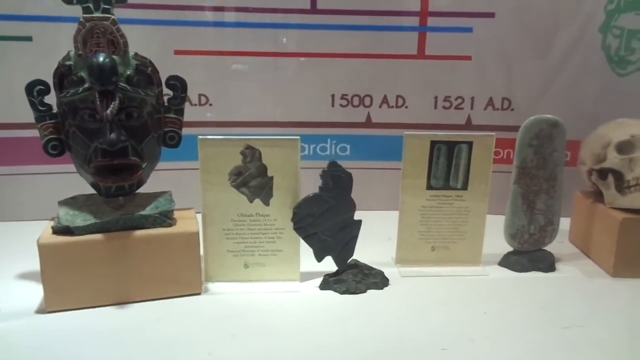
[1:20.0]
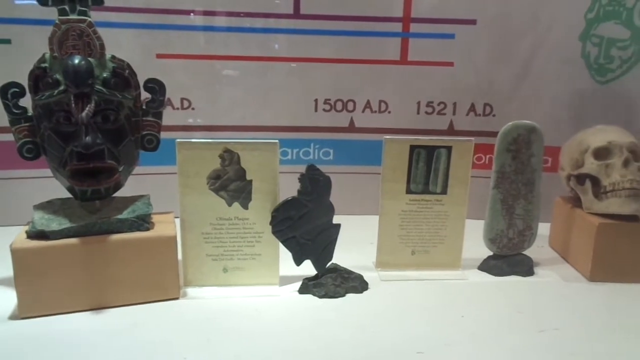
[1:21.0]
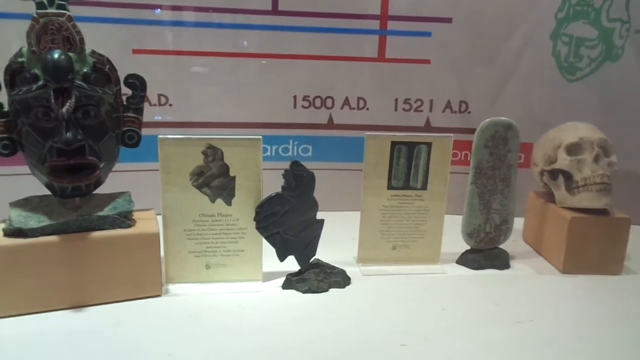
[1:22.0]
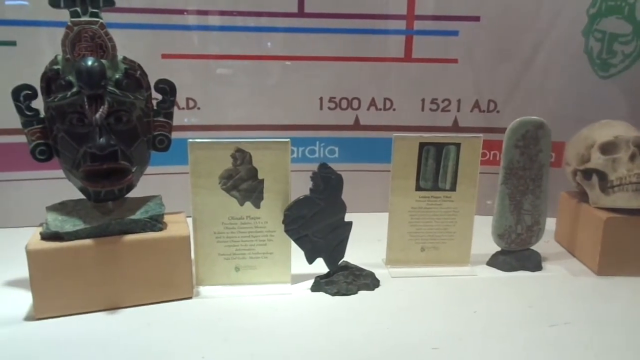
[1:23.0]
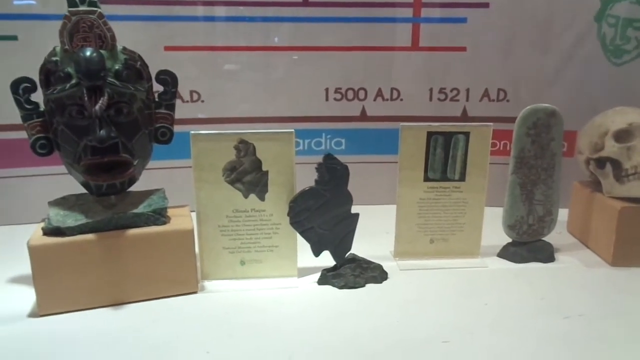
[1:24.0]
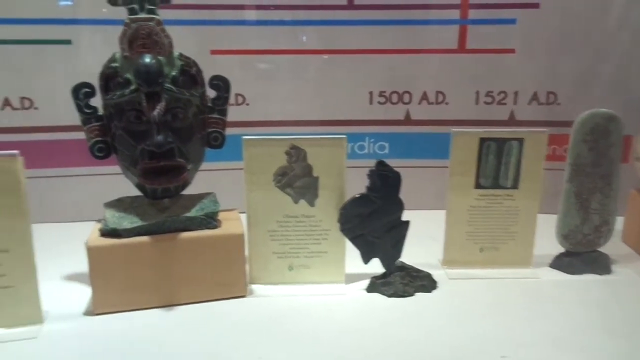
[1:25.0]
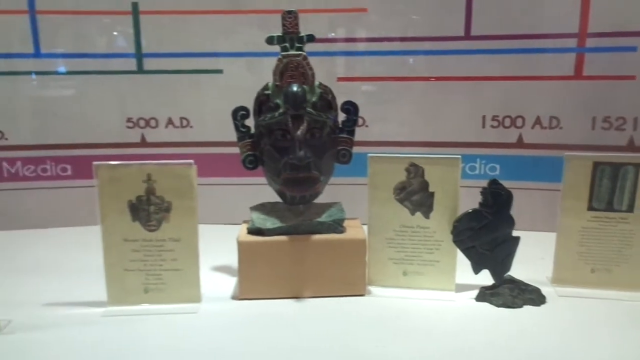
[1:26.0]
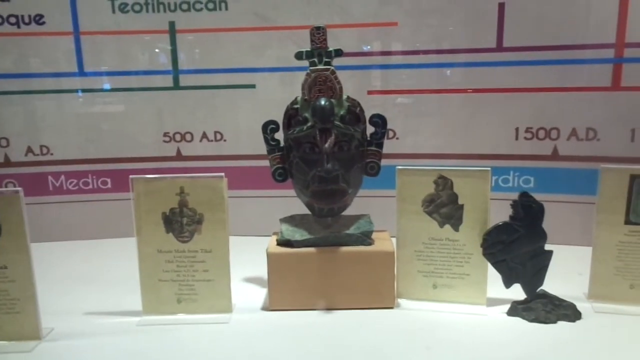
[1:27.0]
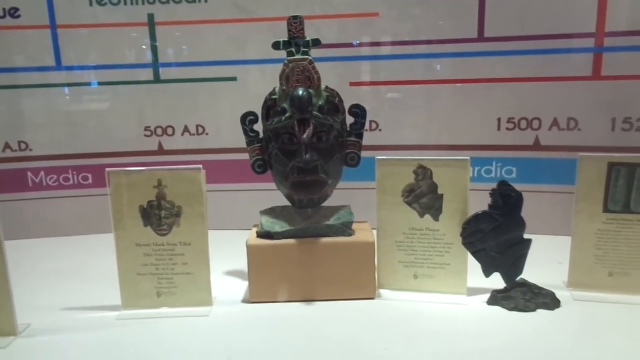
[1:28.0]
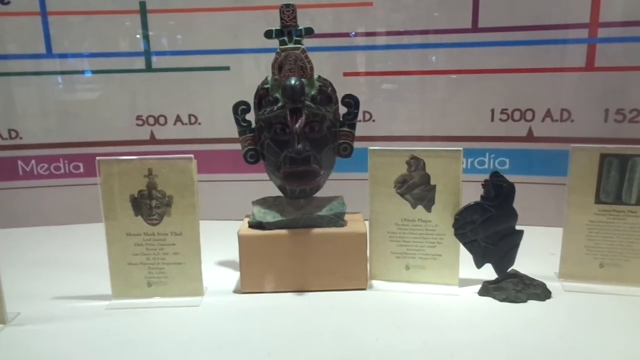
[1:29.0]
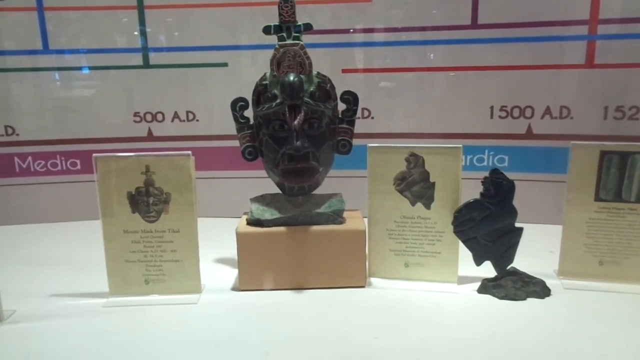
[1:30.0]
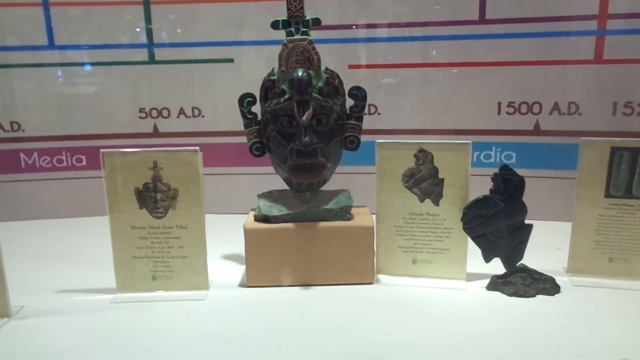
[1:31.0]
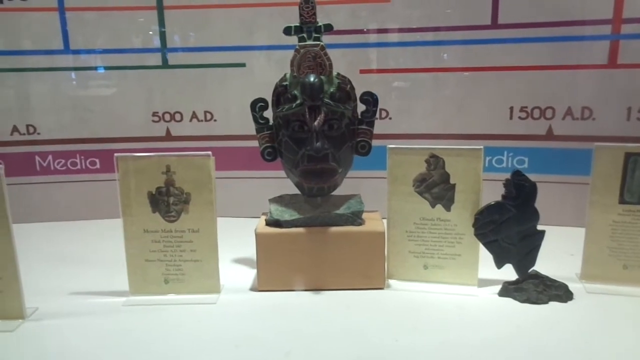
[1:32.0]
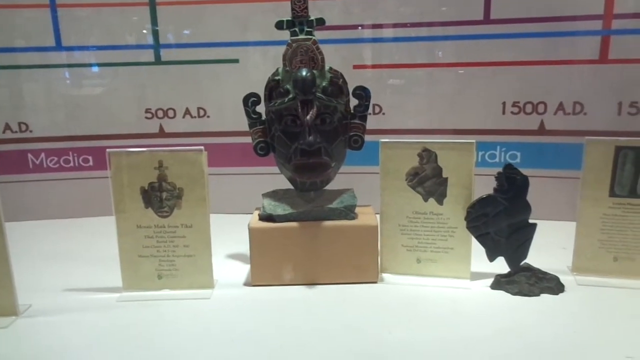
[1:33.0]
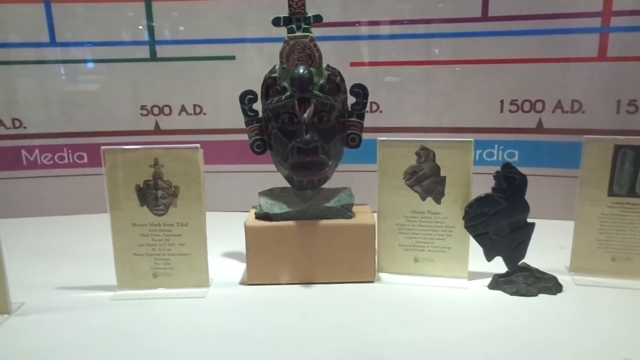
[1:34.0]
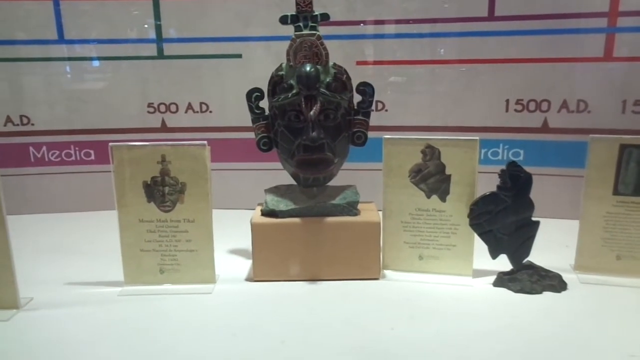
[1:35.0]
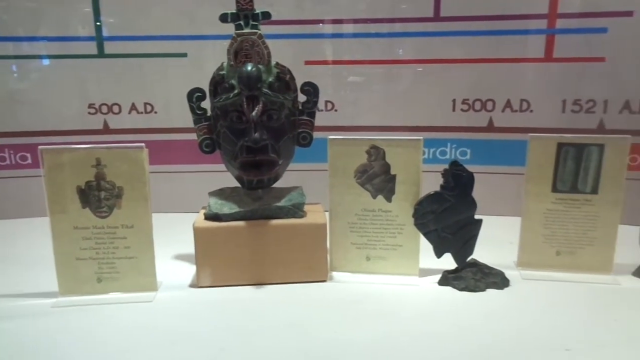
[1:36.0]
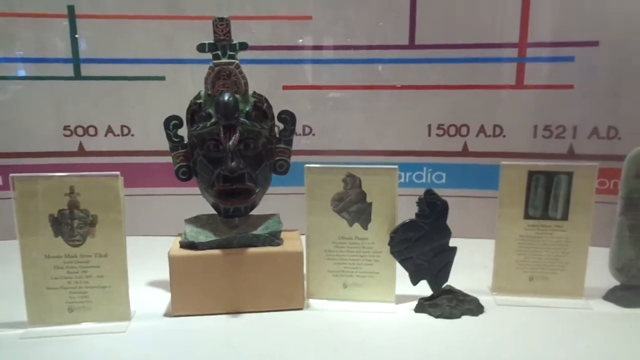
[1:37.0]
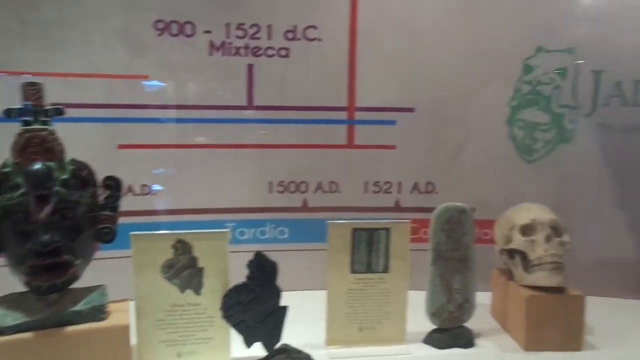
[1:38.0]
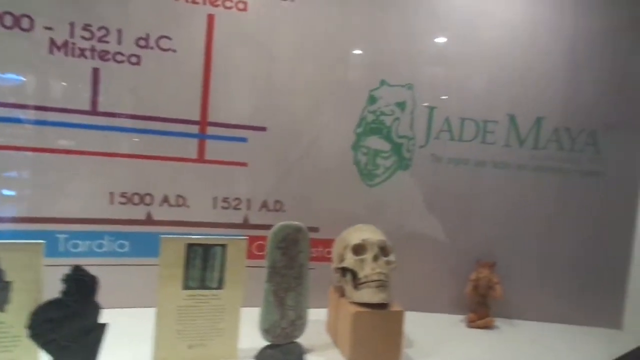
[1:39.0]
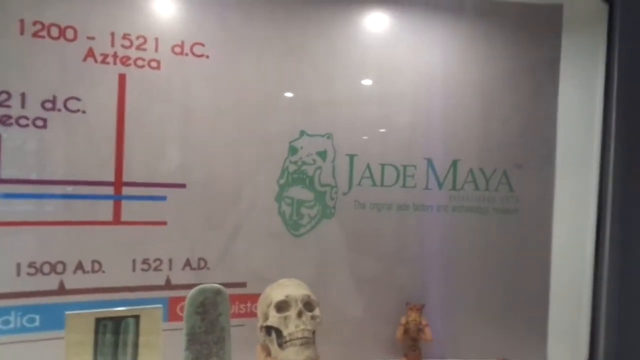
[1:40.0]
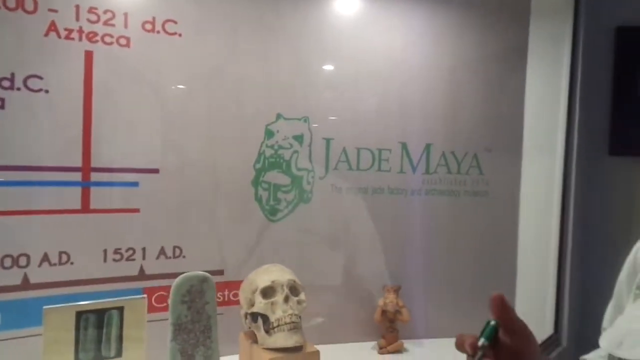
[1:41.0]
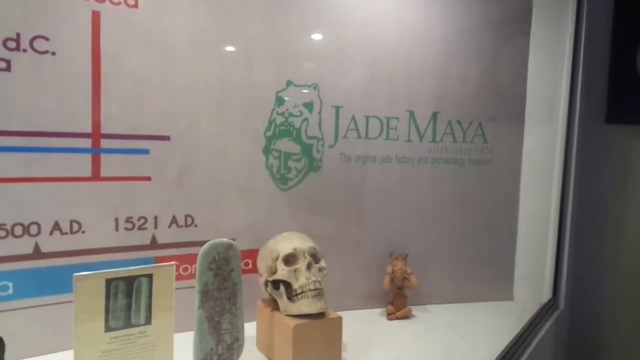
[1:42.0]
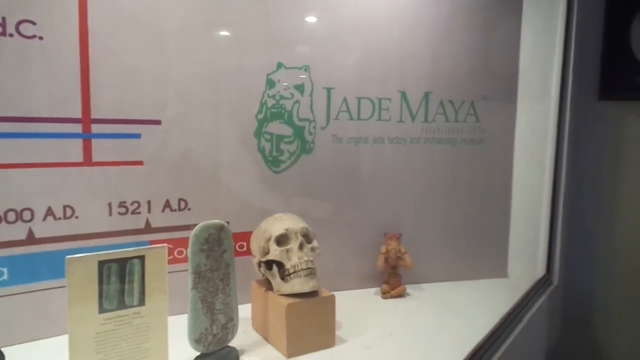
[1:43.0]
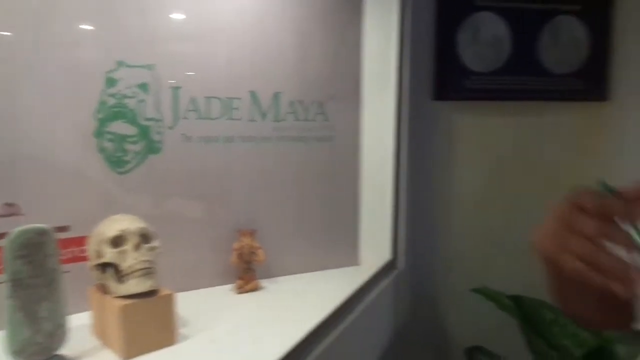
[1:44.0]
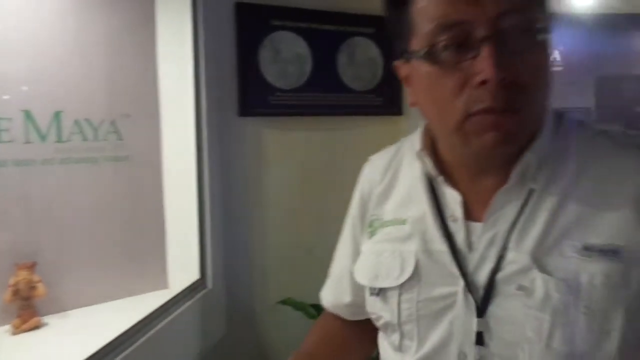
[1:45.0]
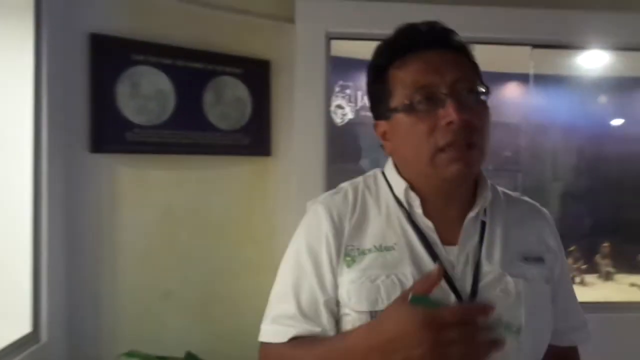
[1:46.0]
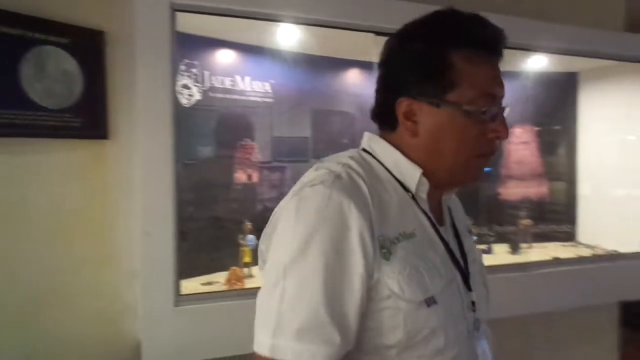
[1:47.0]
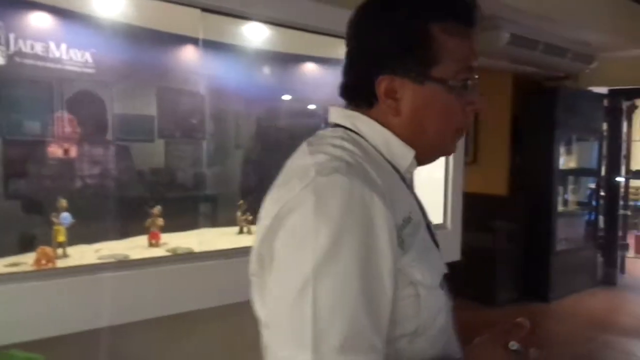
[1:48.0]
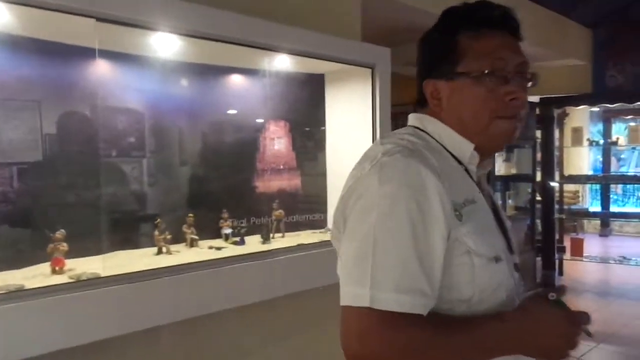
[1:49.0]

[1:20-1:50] The display of apparent artifacts continues: symbols, masks, and a human skull, with "1500 AD" and "1521 AD" appearing a little closer to the skull, along with blue, red and purple lines. The camera pans back slightly to the left to a greenish symbol that almost looks like it has hands on one side, perhaps a mask. Above the skull, green writing says "jade, maya," and there is a figure that looks like a woman with a skull hat on top. The person explaining the display is possibly of Asian, Indian or Native American descent and wears glasses and a white shirt with green writing. Another display behind shows the jade Maya section with small figurines. The camera then focuses on the person speaking.